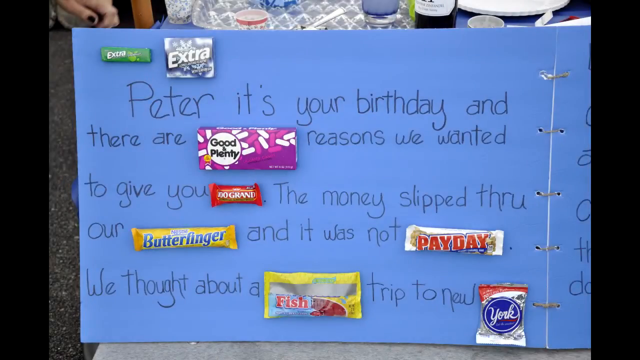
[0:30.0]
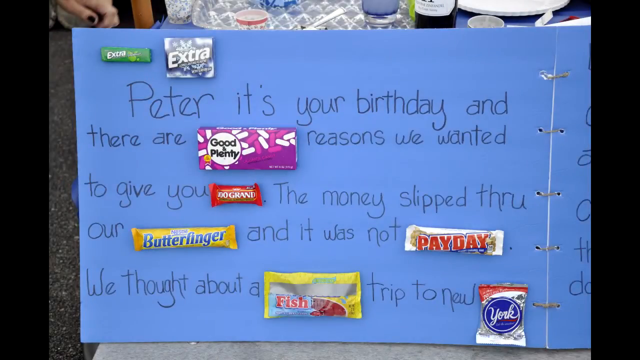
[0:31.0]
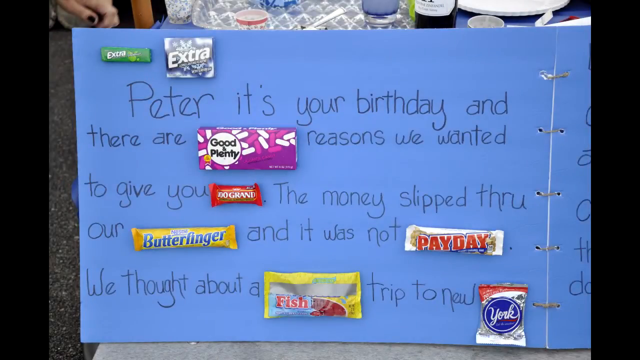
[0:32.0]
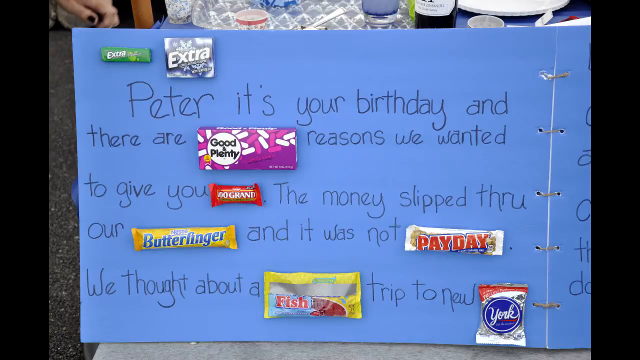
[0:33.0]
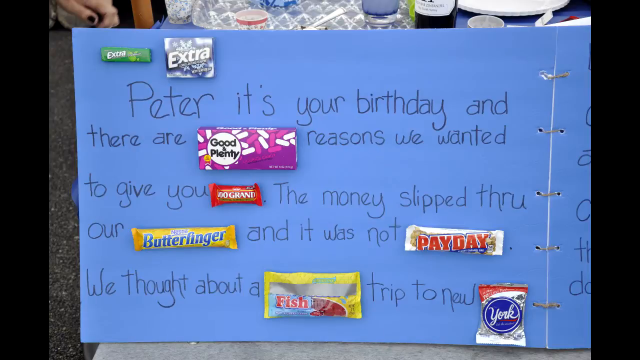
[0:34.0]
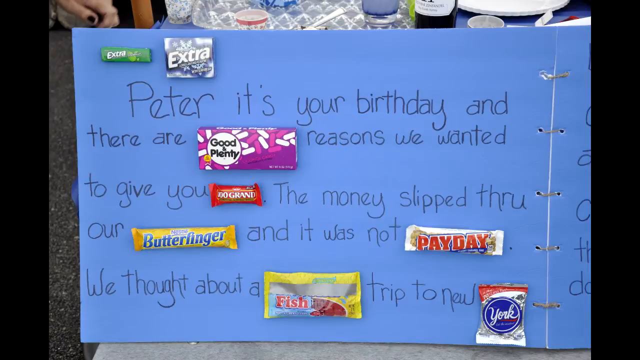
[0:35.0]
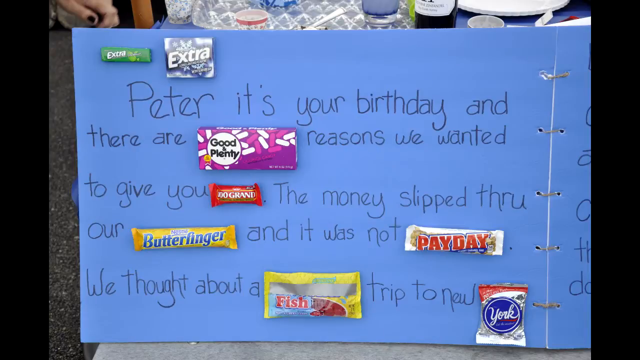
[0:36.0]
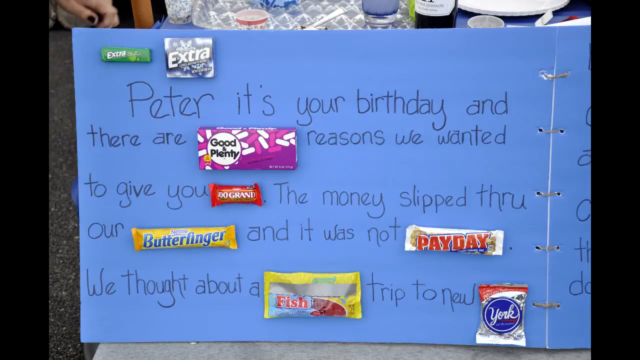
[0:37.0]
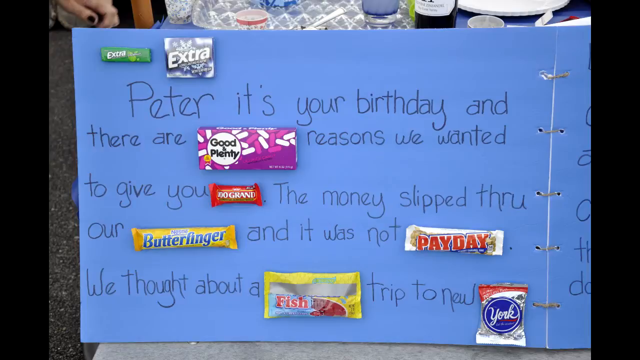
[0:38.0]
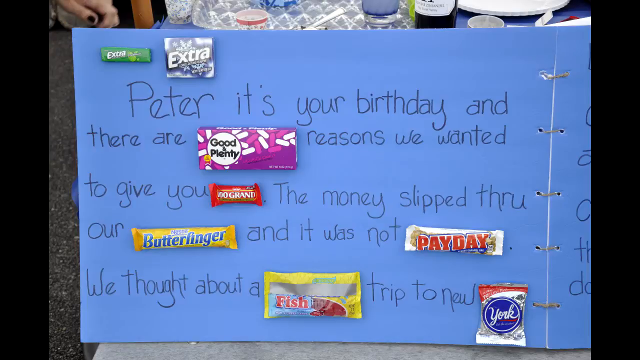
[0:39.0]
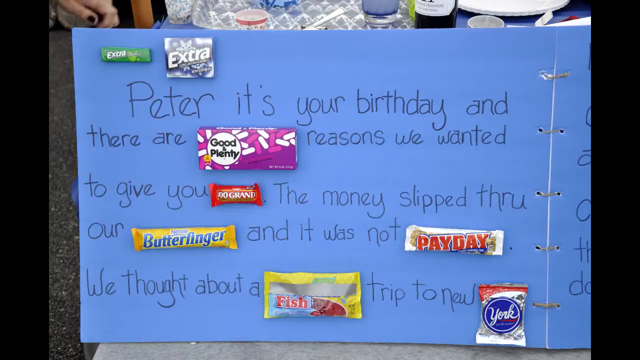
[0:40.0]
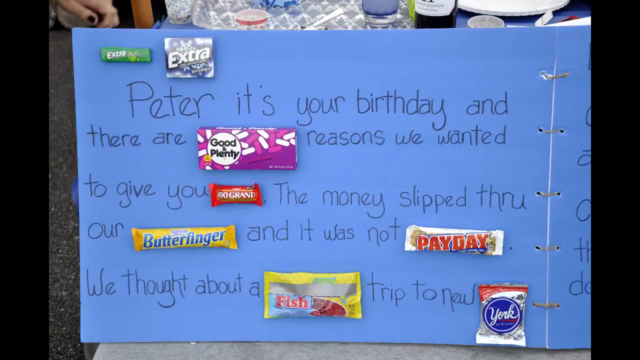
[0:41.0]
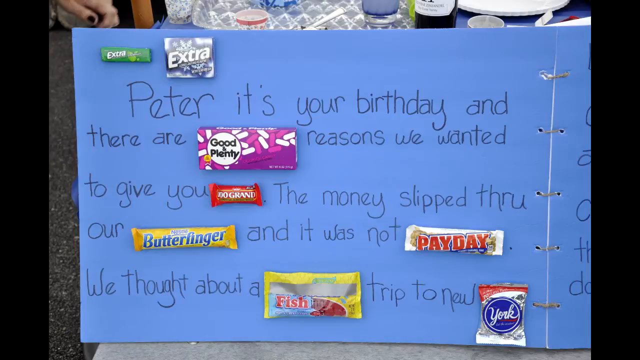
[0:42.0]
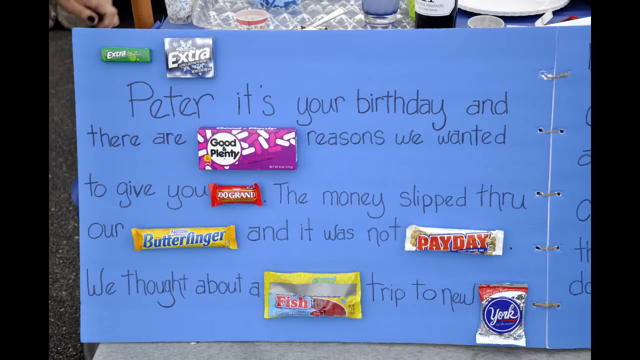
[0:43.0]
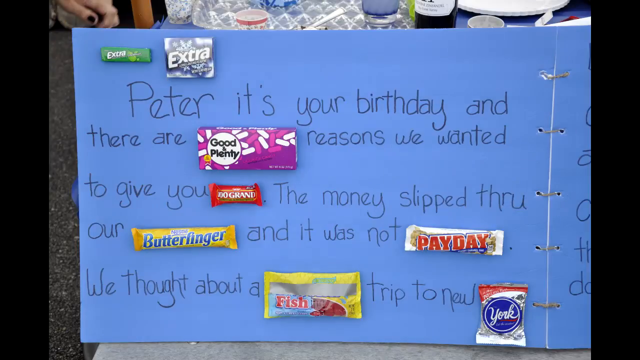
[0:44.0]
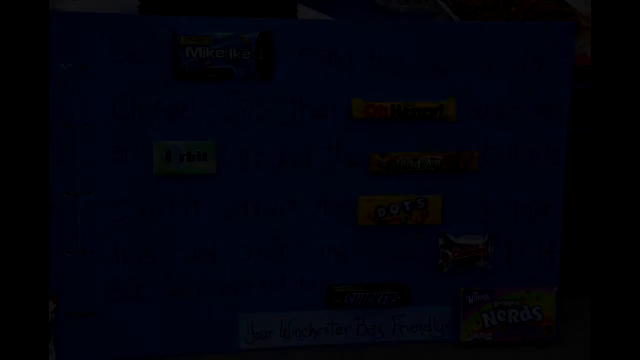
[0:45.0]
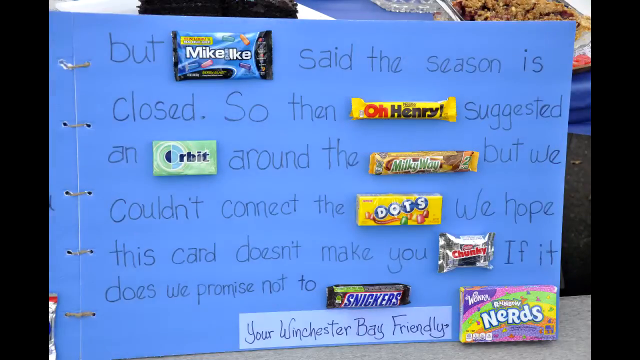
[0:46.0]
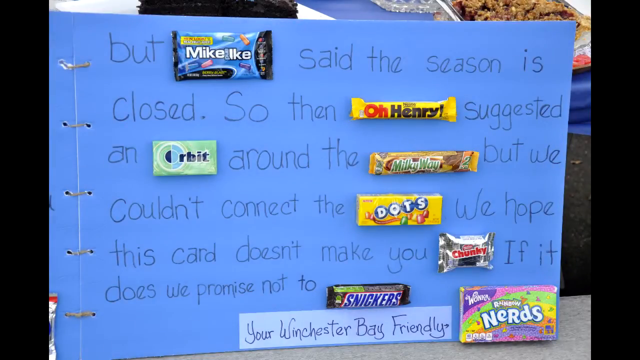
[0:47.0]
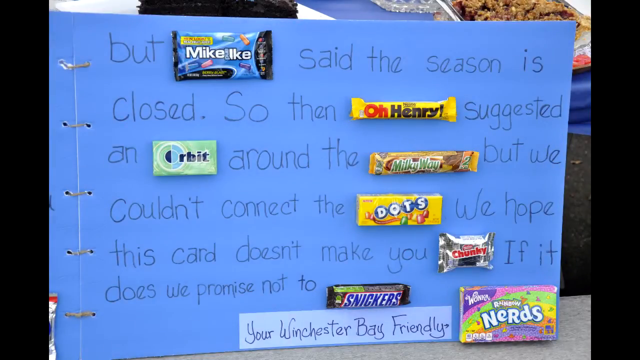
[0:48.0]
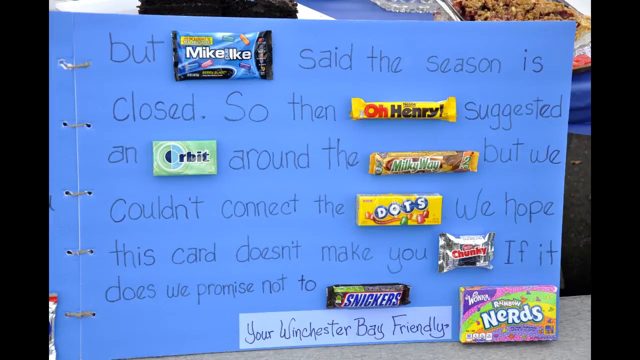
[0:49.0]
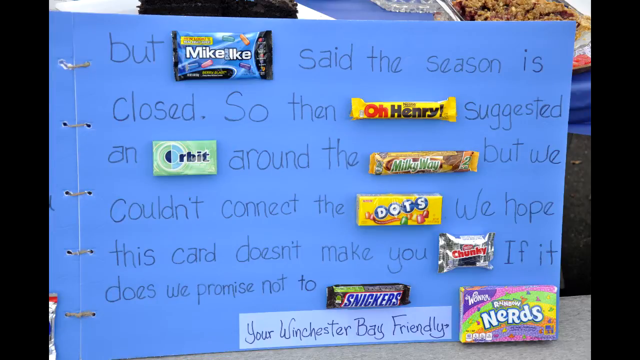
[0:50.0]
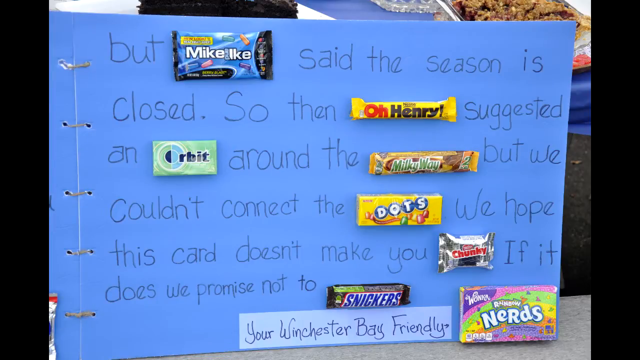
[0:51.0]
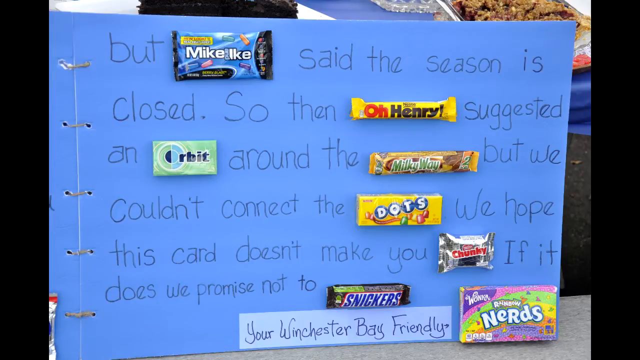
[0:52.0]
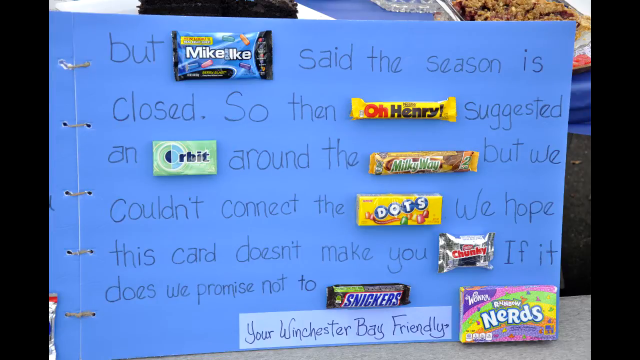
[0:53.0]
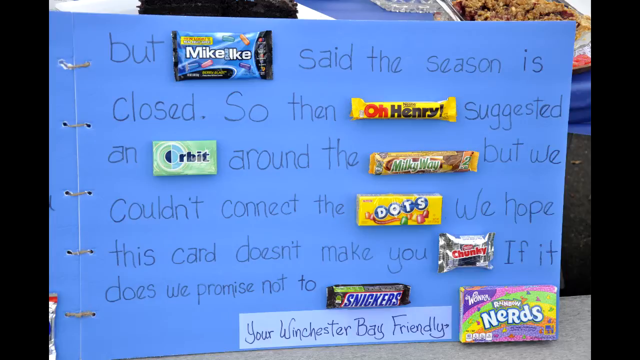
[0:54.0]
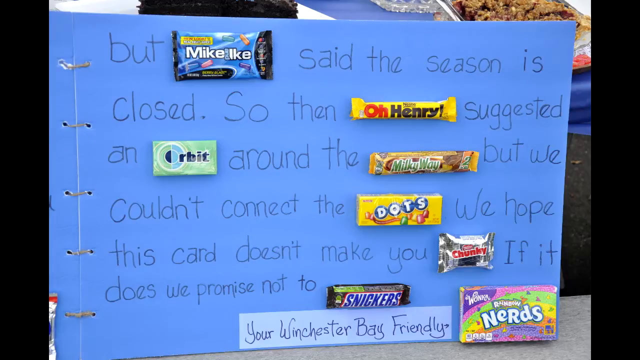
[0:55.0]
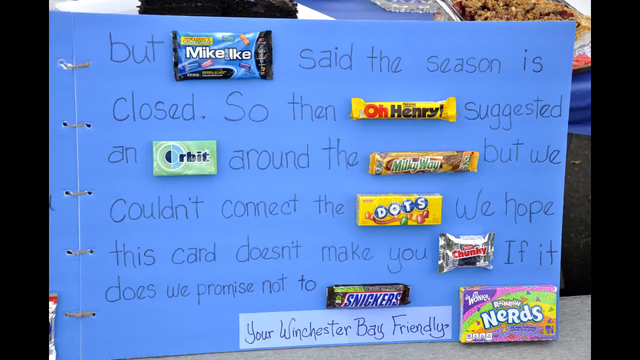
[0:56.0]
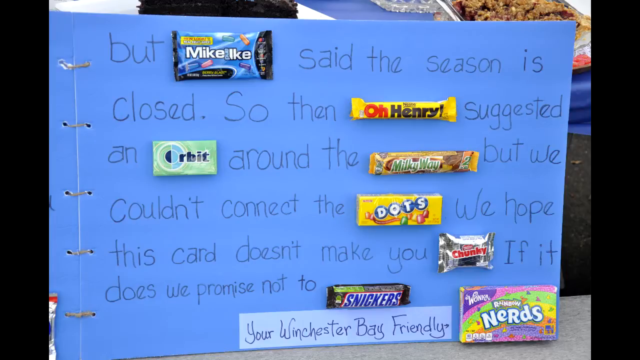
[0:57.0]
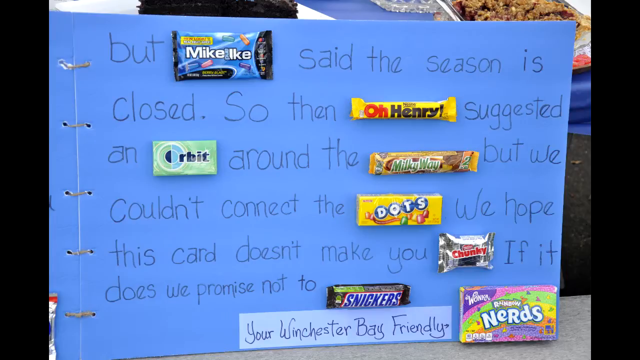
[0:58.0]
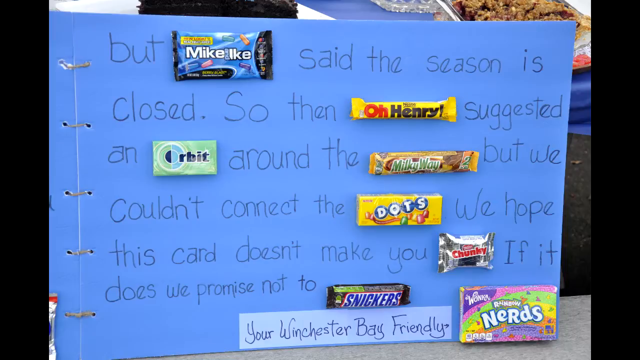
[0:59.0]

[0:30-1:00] The video looks like an ad. A diary with a lot of blue color has words written in black ink, and candies with words on them are placed so that they fit into the sentences. One sentence reads "Peter is your birthday, and there are", followed by a pasted candy with the words "good" and "plenty". Another candy reads "Go, Grant". A sentence reads "The man slipped through our" with a candy reading "better finger".